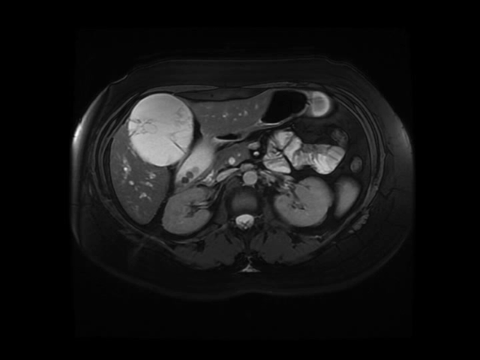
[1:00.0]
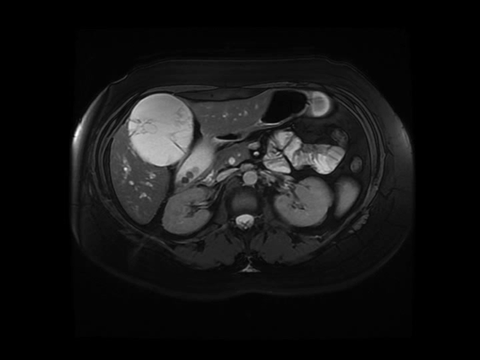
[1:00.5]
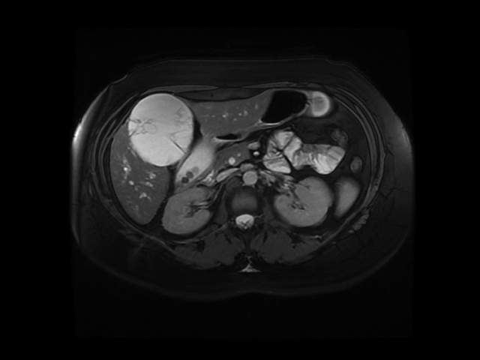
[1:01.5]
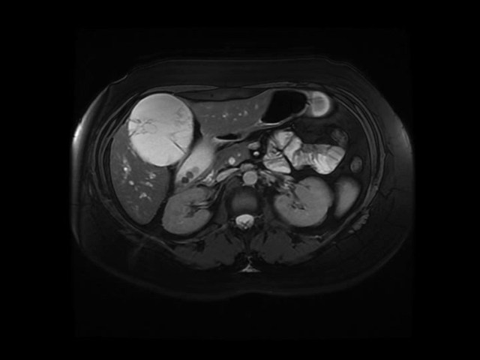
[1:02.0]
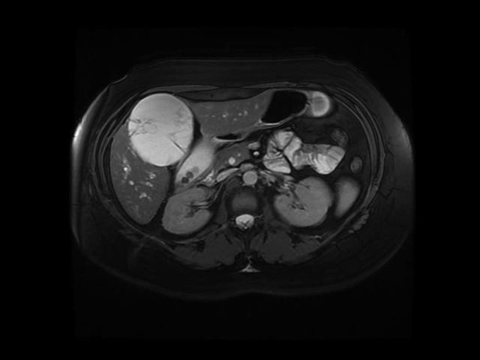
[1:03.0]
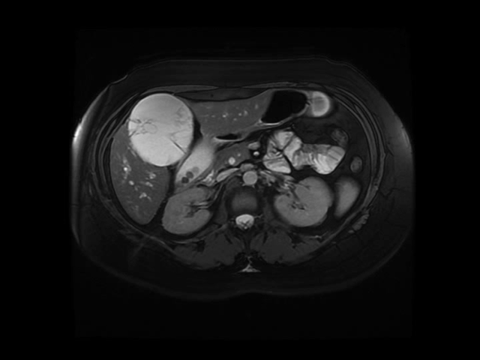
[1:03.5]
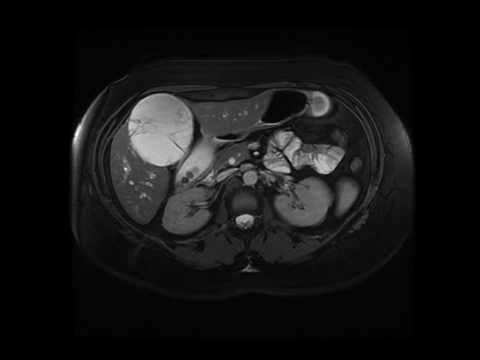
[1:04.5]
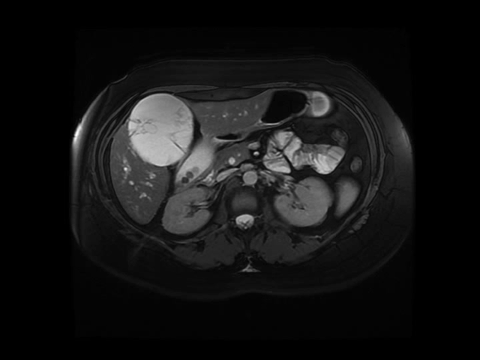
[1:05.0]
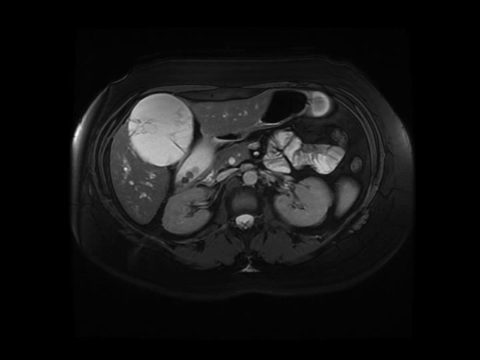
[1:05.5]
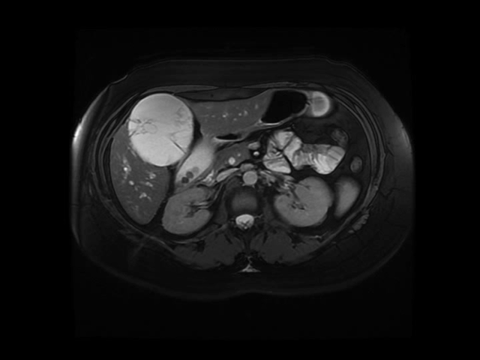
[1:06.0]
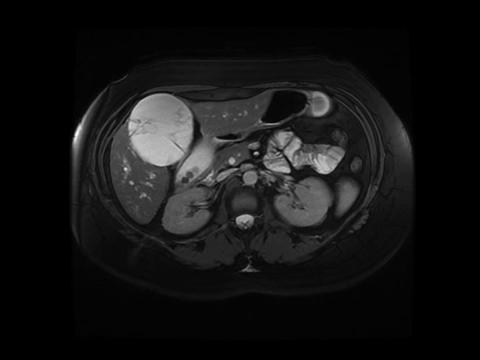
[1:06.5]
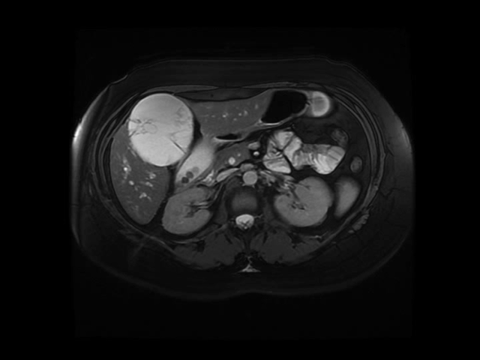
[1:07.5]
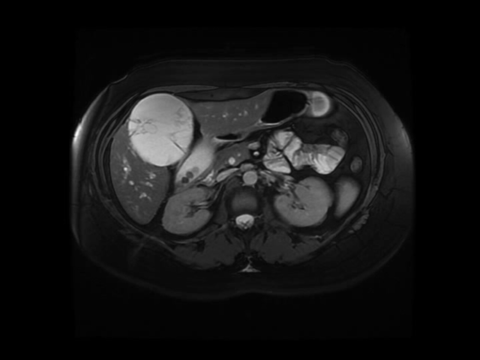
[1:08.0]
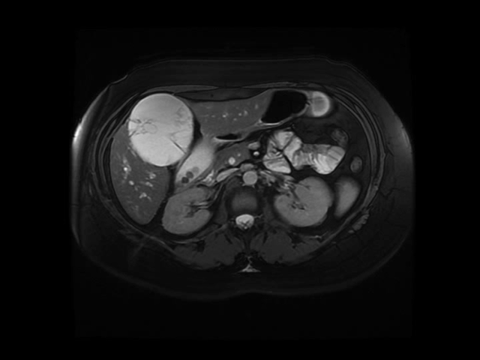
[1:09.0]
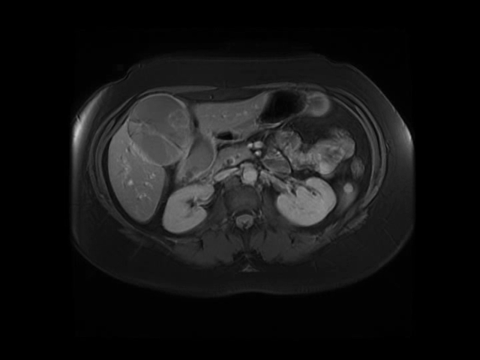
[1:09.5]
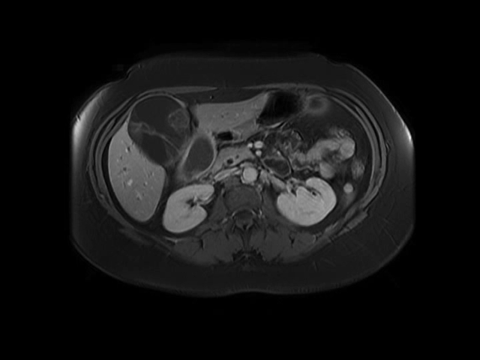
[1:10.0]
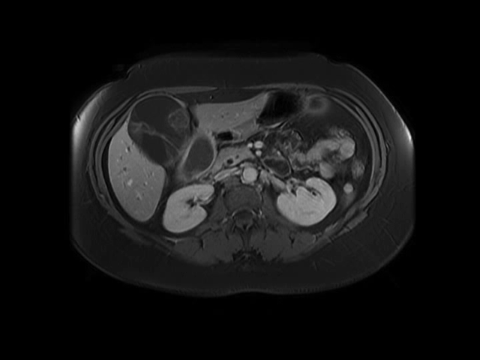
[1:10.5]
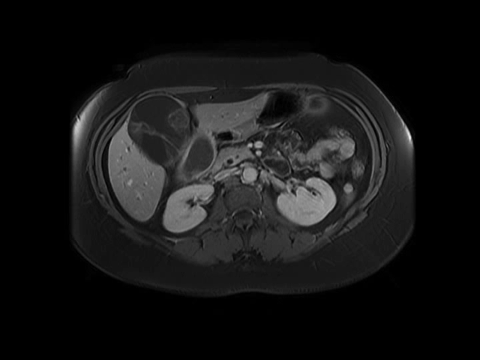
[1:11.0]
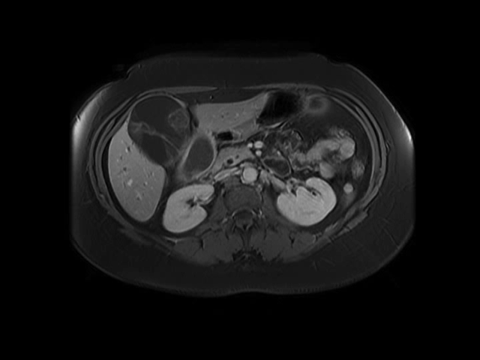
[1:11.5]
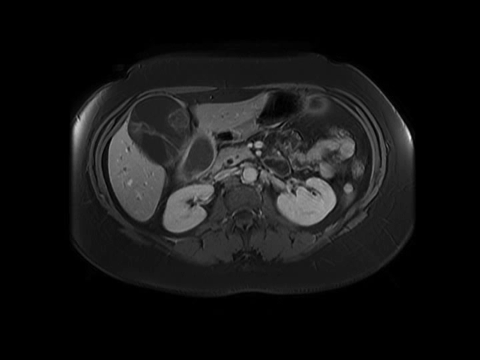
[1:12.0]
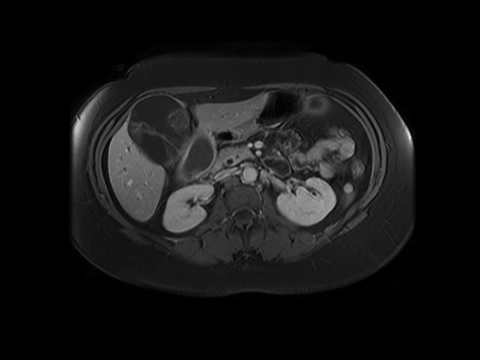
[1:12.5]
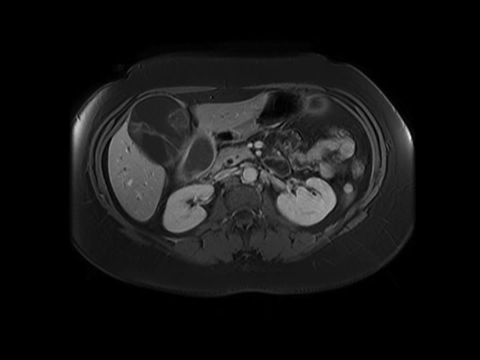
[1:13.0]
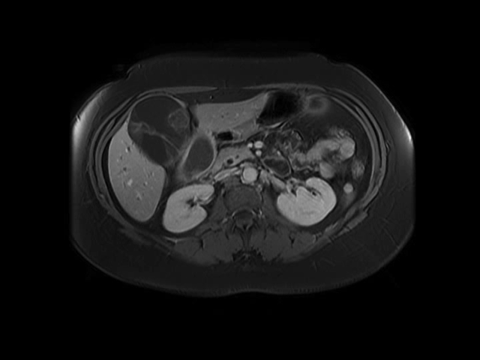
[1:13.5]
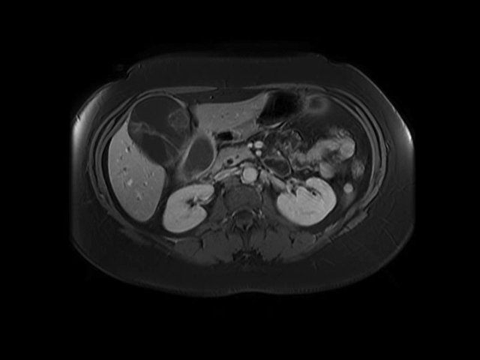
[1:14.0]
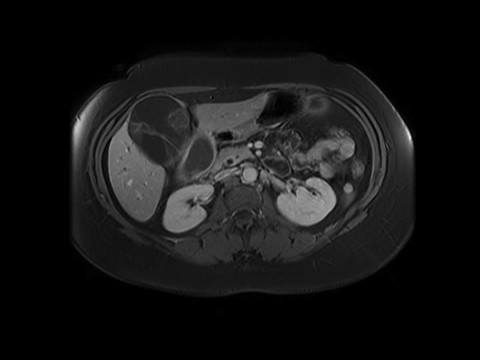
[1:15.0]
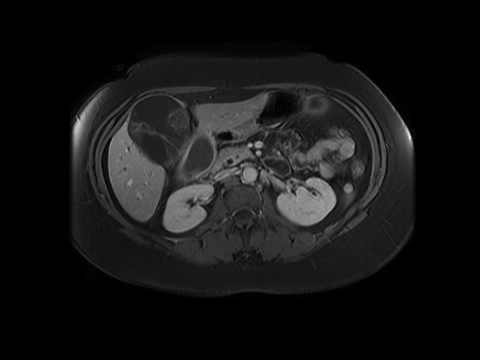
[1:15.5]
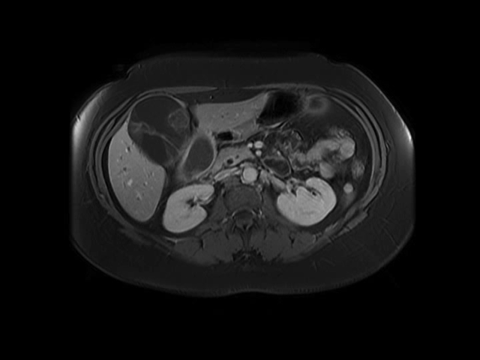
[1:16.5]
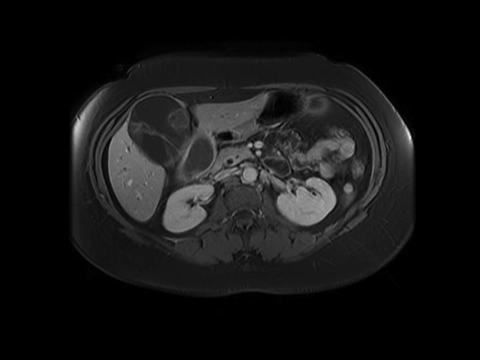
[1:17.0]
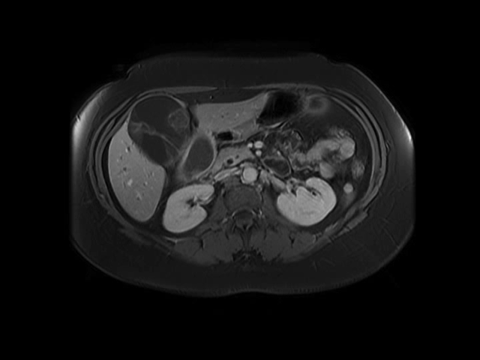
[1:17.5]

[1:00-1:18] The top-view image of what appears to be the human trunk or abdomen is displayed again, but it looks different: it is thicker on the sides of the irregular oval shape, with a thick dark grey ridge around the whole perimeter. Towards the bottom of the oval are lighter grey shapes that look like goat horns. In the middle is an almost white grey part that appears to be the inside of the spinal cord, with kidney-bean-like shapes to its left and right. The liver apparently is to the left of the image; its bottom, sharper part is now dark grey with a few small white spots sprinkled in, possibly veins or arteries, and its top part looks like a round whitish grey ball with a few wisps of darker grey, smoky-looking shapes in it. The rest of the image is unclear variants and blotches of white, grey and black.